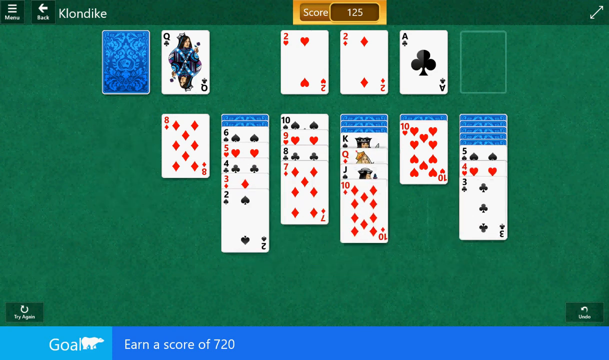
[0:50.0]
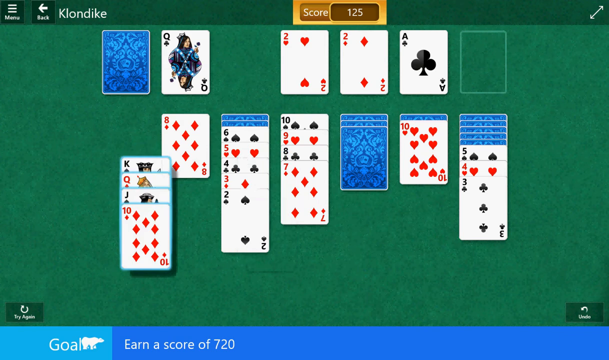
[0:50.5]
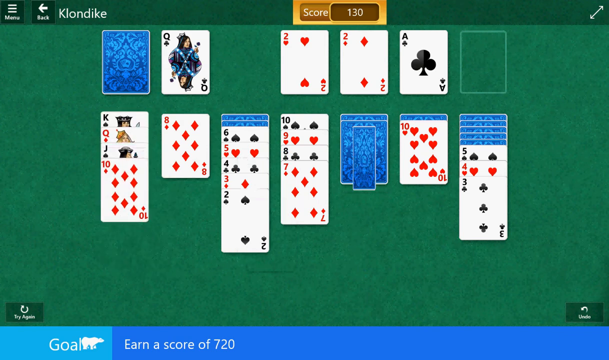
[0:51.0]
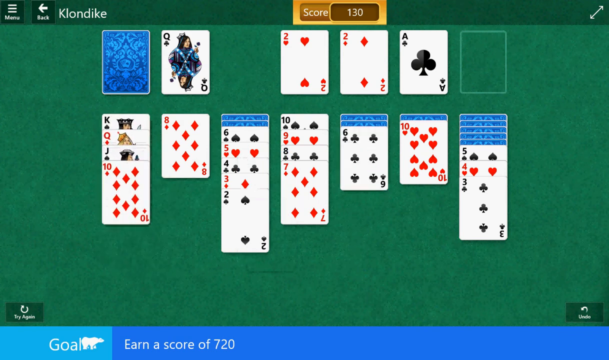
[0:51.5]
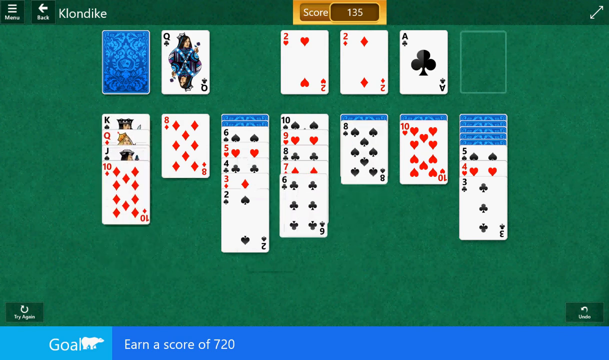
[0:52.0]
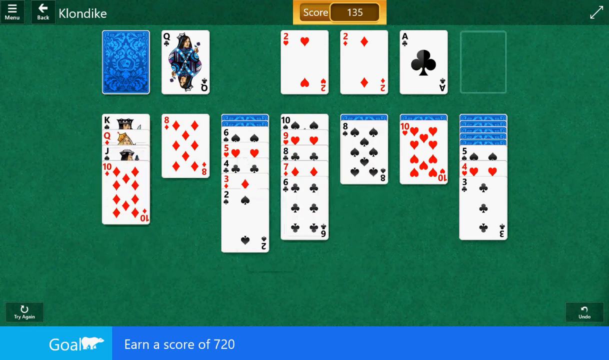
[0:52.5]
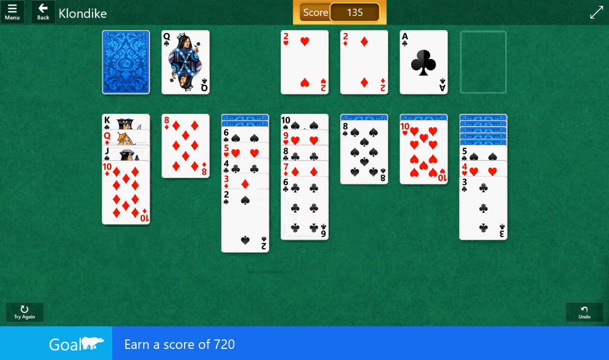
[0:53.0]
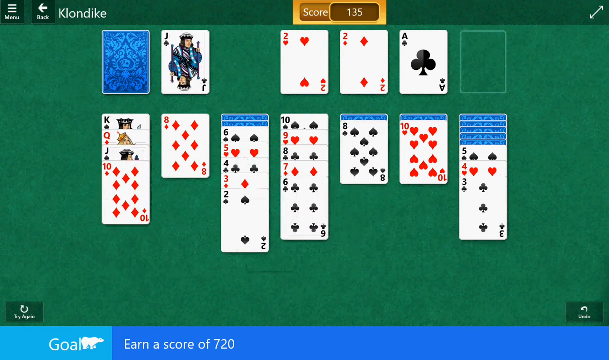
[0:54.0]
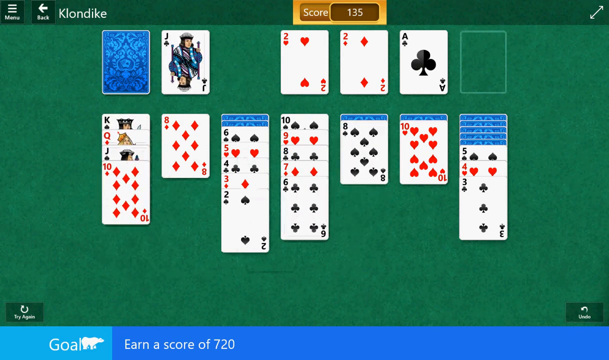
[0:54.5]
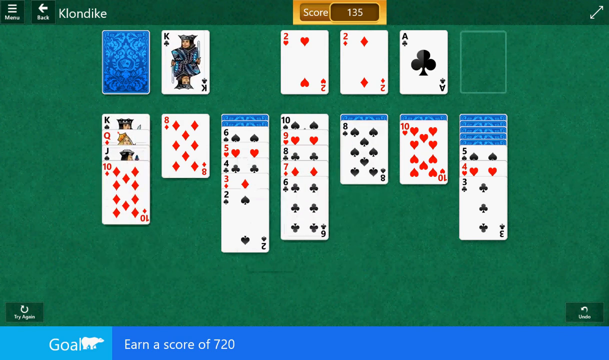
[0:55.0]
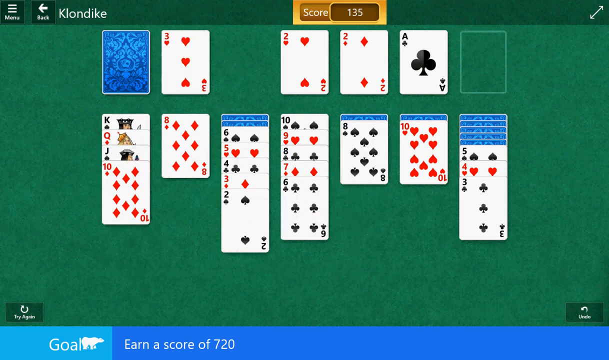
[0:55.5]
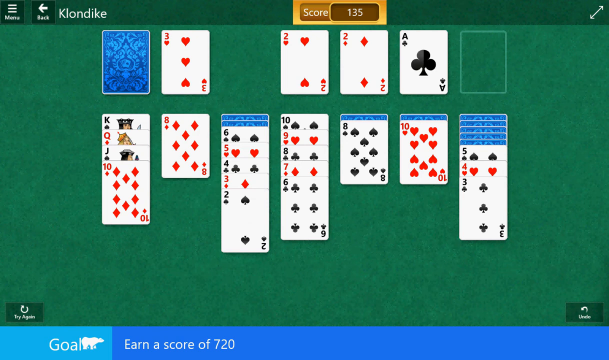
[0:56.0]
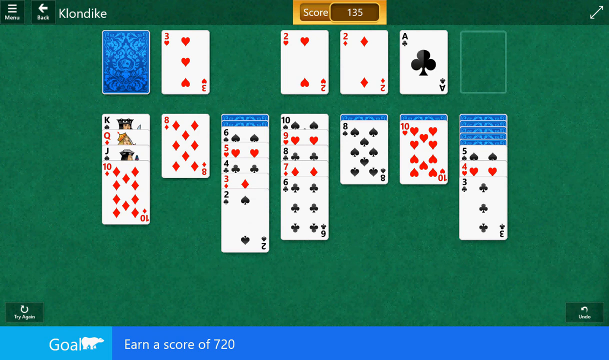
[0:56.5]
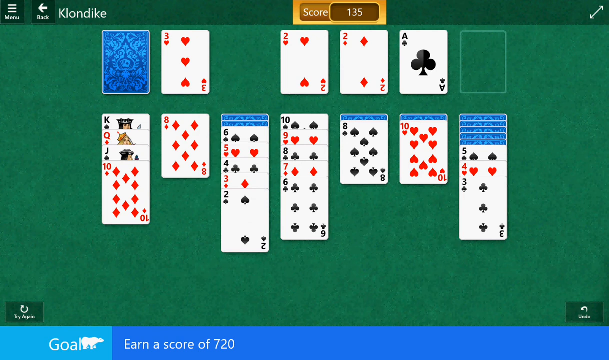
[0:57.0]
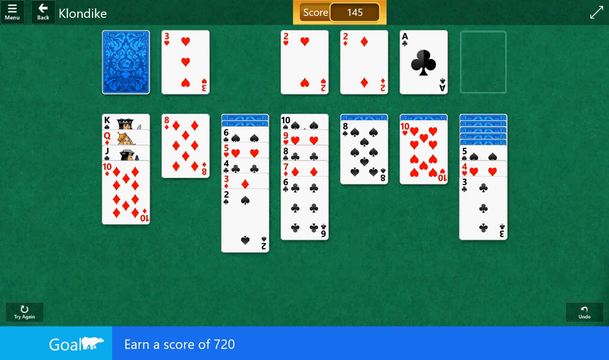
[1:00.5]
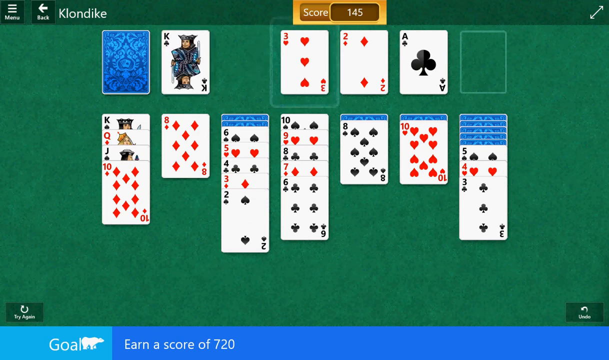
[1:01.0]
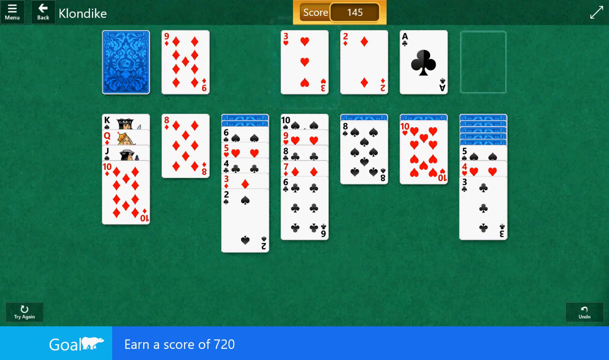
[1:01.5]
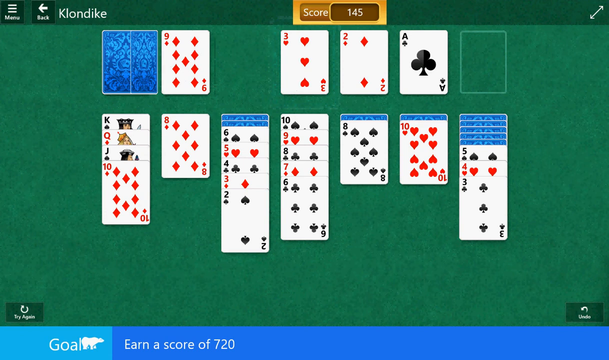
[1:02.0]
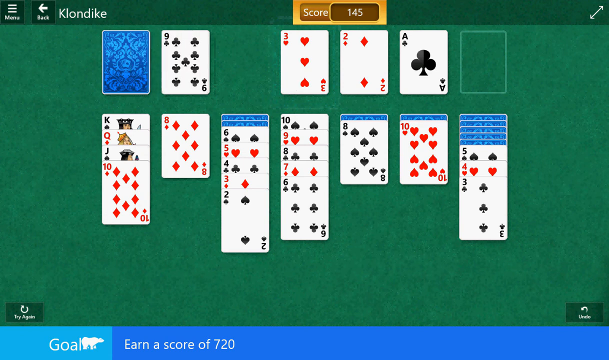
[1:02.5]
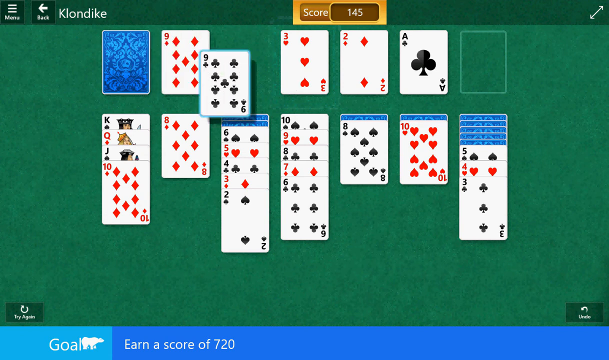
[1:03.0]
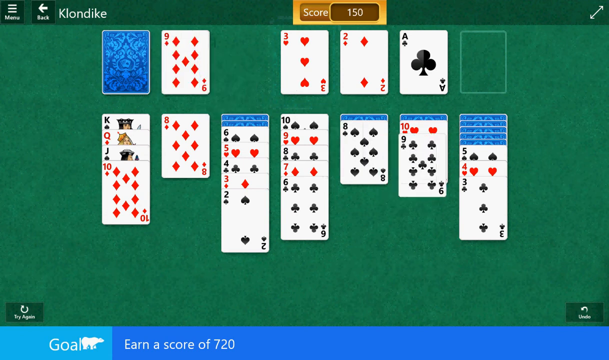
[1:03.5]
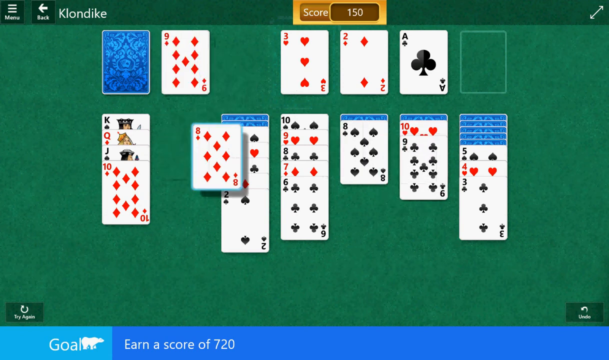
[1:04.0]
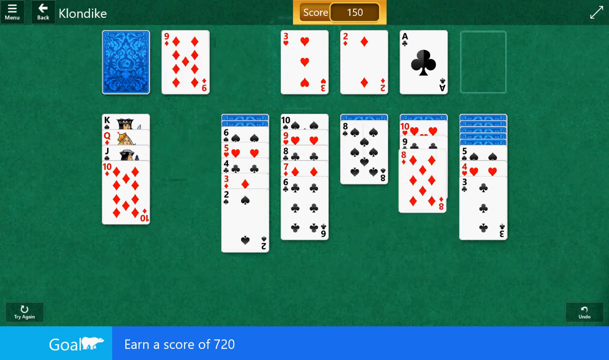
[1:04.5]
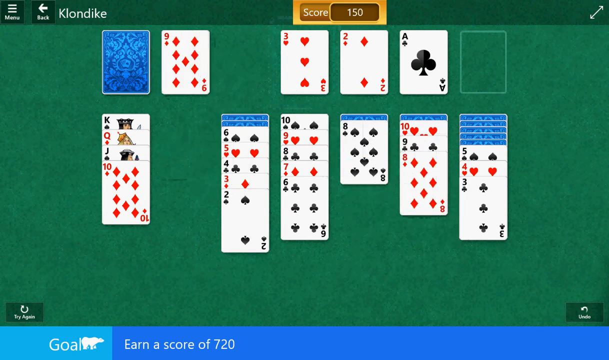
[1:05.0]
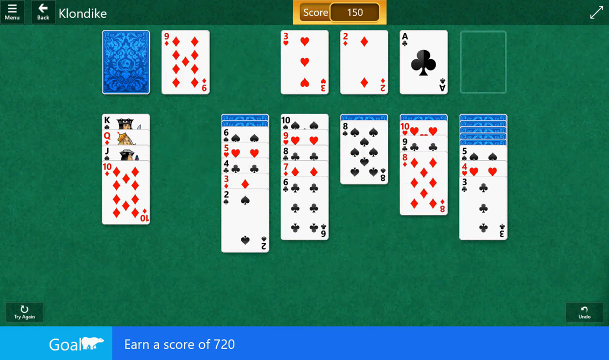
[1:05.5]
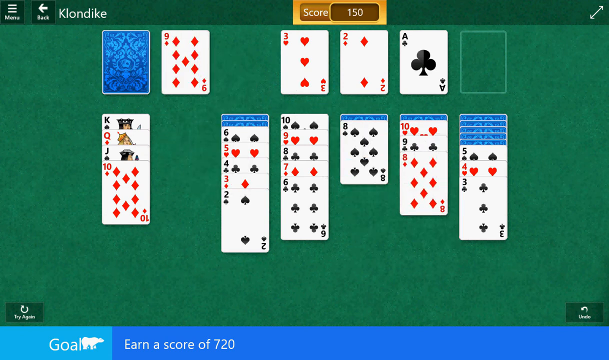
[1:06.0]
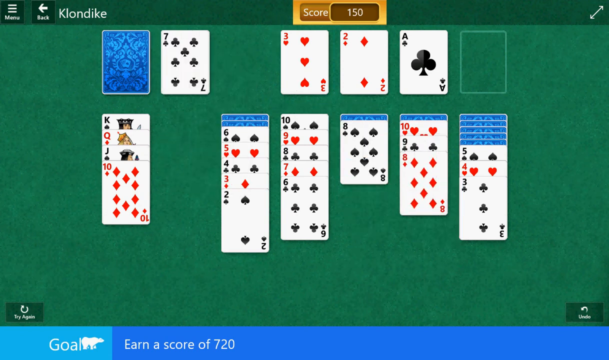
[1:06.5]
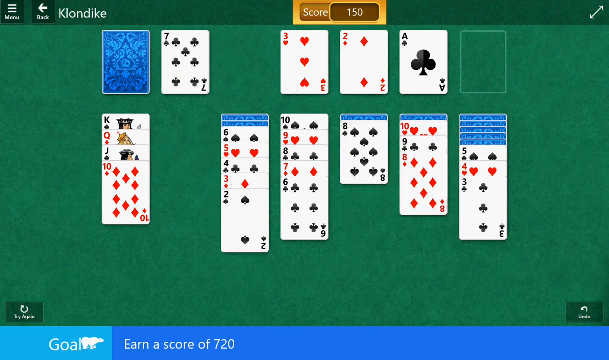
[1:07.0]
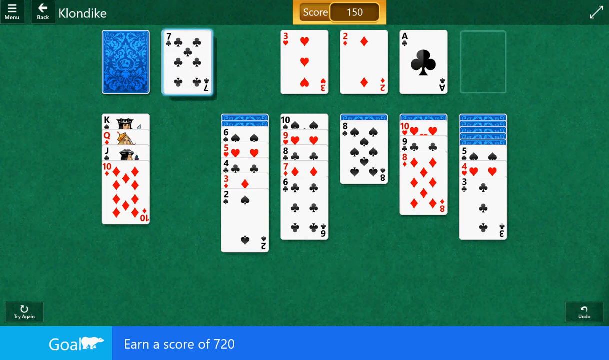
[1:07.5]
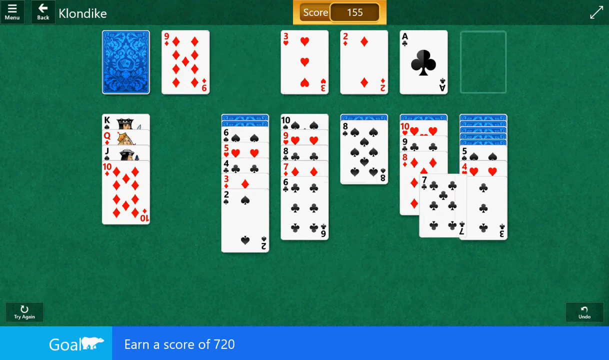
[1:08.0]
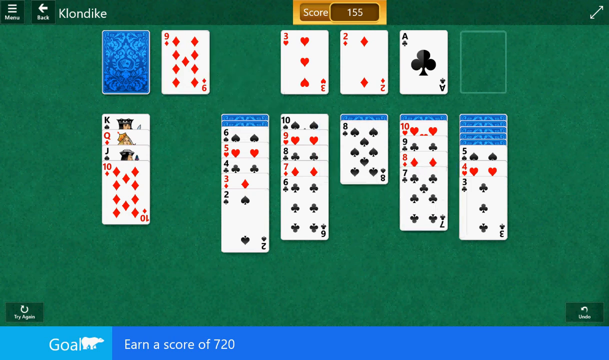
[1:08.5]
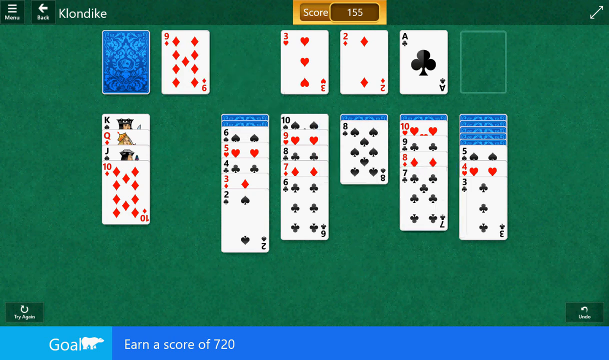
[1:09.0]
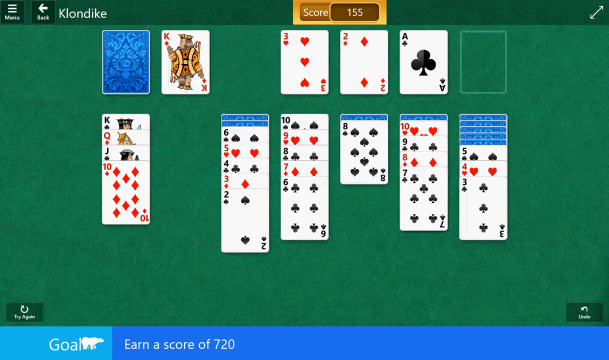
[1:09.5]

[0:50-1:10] A computer game called Klondike, a version of Solitaire, is on someone's computer screen or gaming unit. The whole background is green, the card backs are blue, and the flipped cards look like normal playing cards. A middle area at the very top, in yellow and brown, shows the score. The score starts at 125 and goes up five points with each card moved, reaching 155. The two of hearts, the two of diamonds, and the ace of clubs are up.